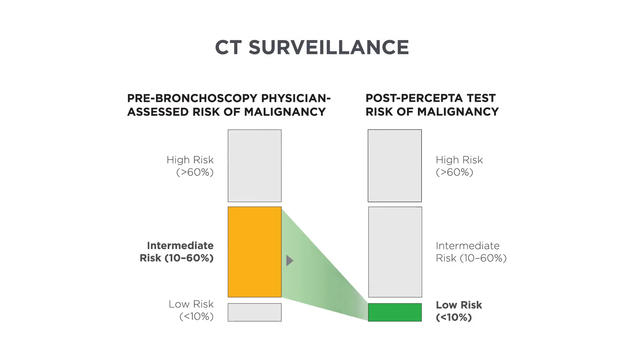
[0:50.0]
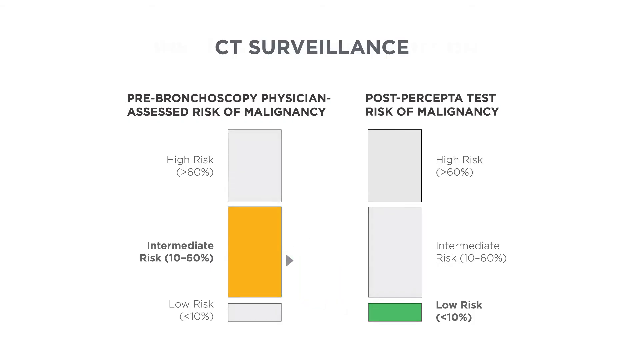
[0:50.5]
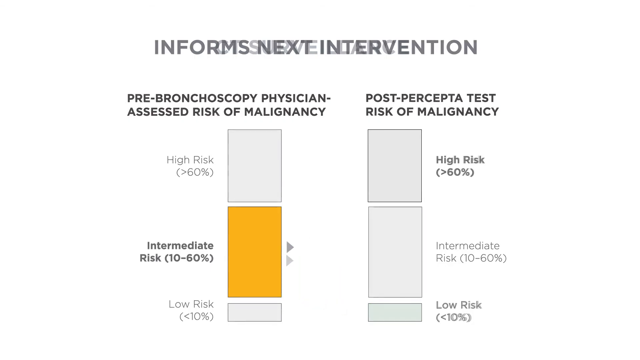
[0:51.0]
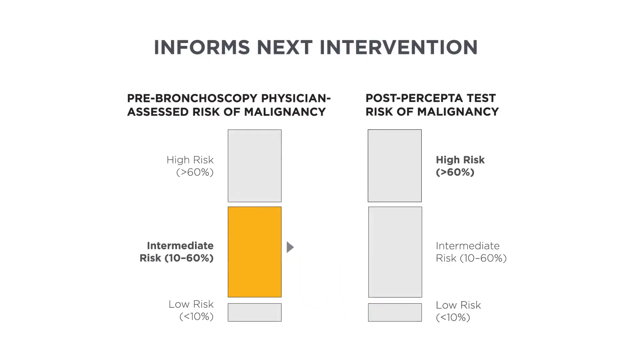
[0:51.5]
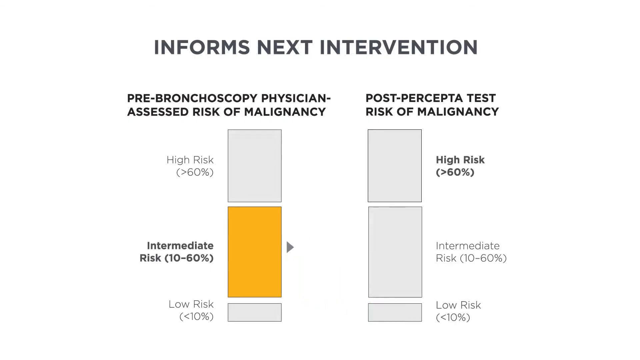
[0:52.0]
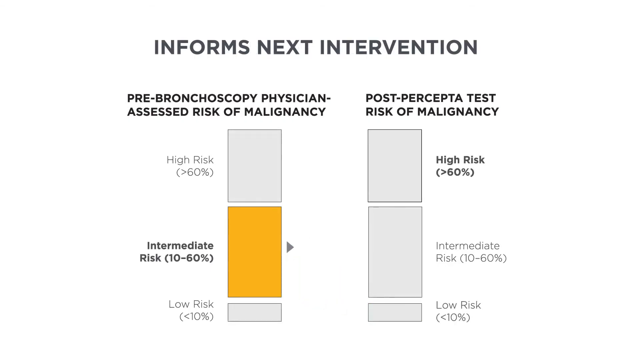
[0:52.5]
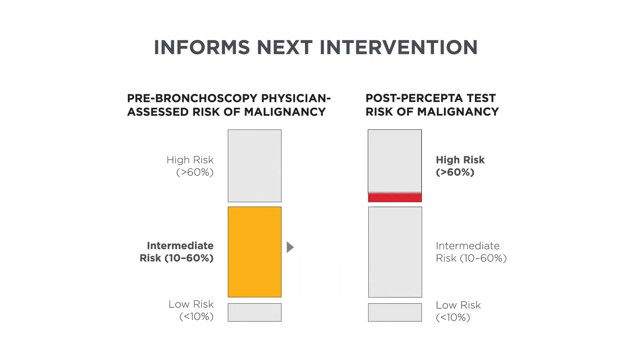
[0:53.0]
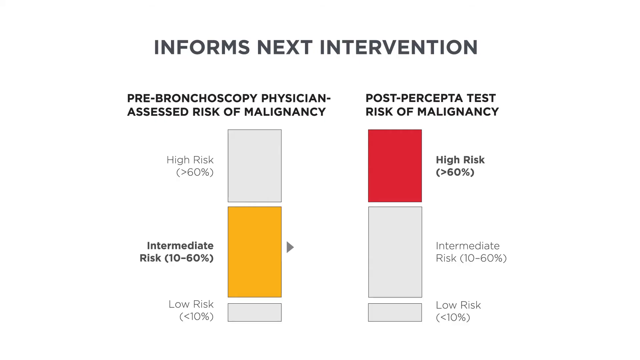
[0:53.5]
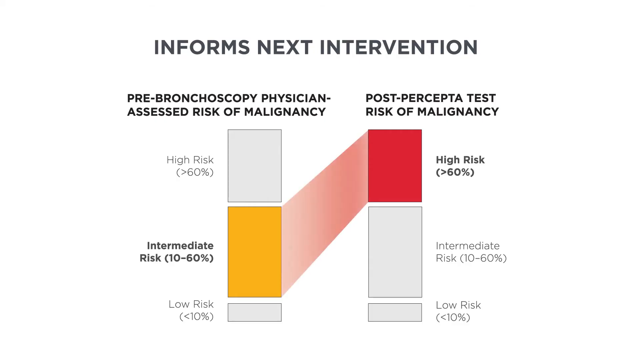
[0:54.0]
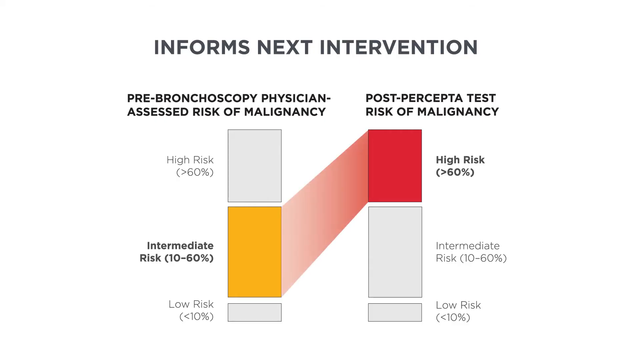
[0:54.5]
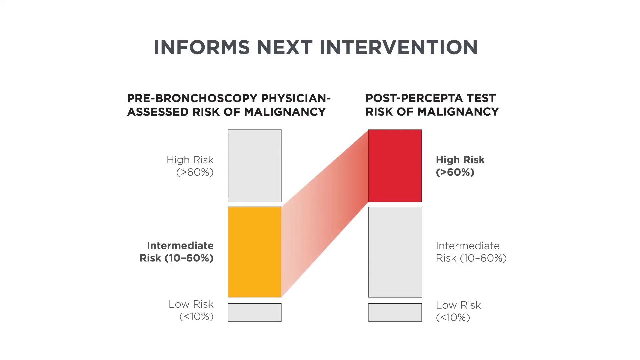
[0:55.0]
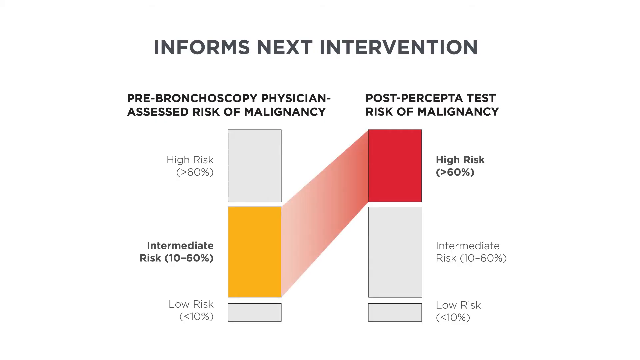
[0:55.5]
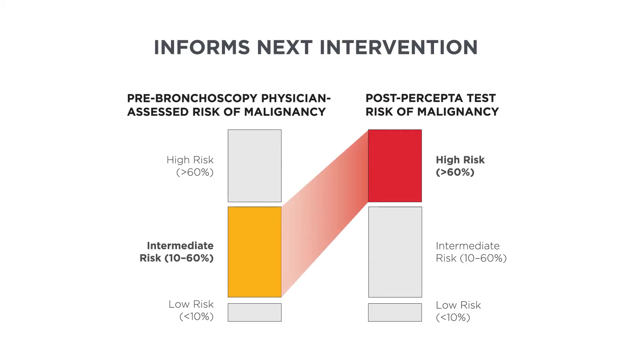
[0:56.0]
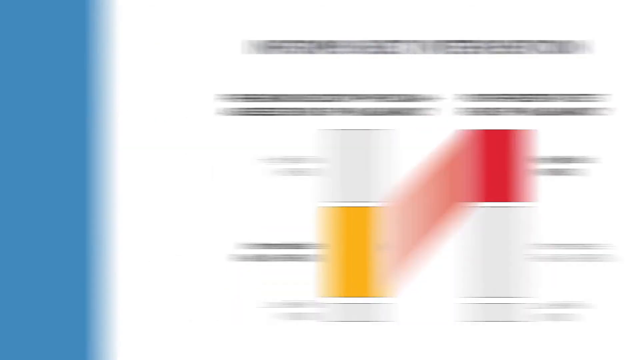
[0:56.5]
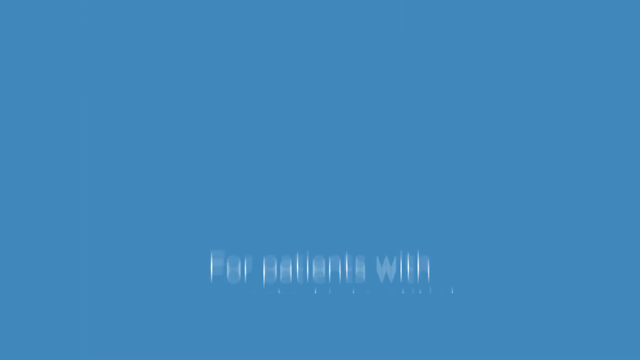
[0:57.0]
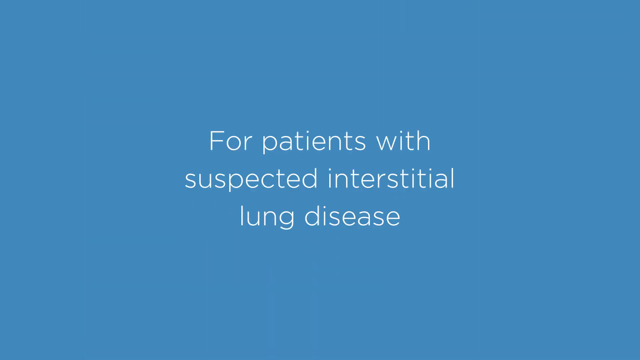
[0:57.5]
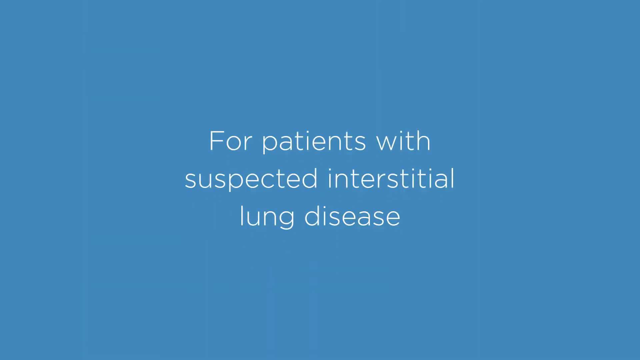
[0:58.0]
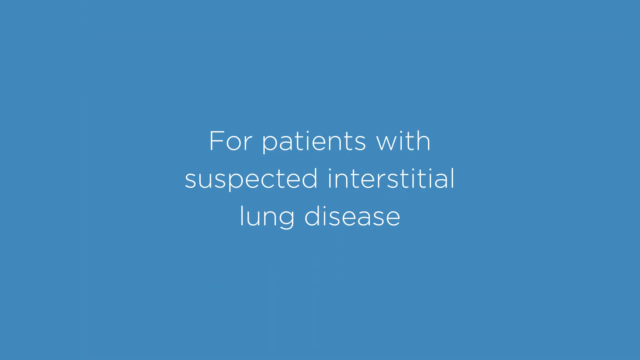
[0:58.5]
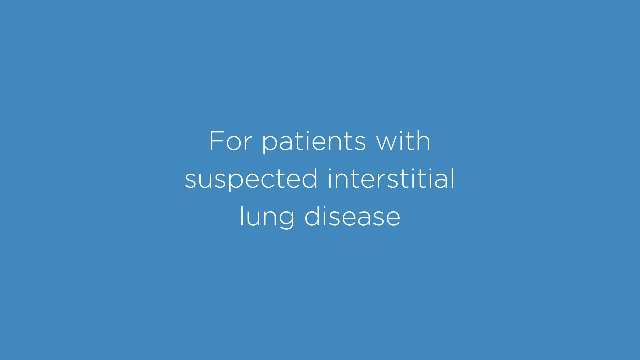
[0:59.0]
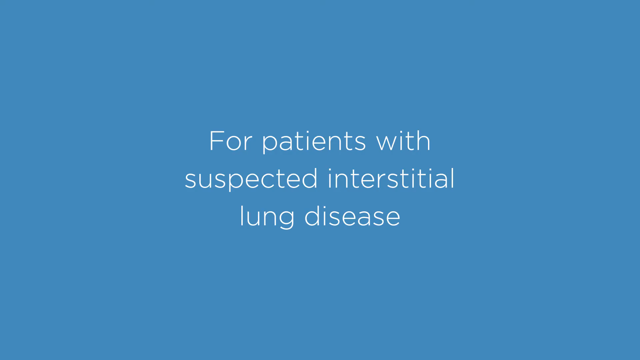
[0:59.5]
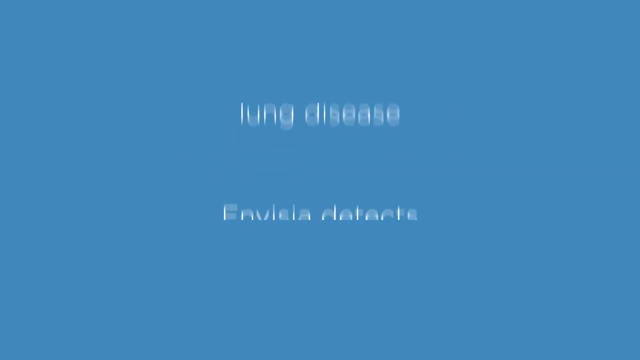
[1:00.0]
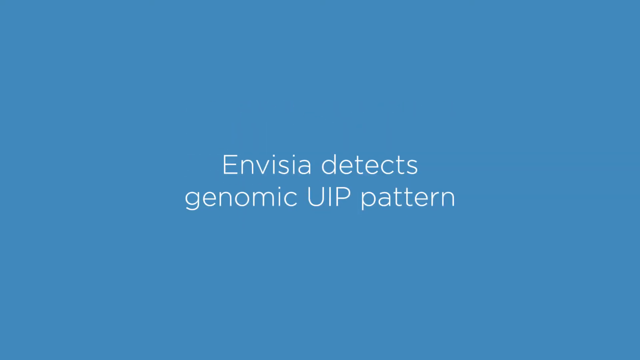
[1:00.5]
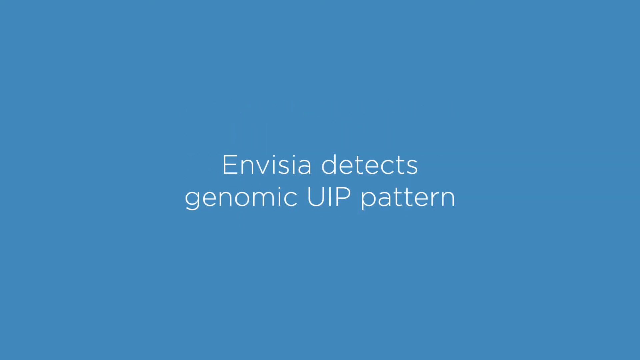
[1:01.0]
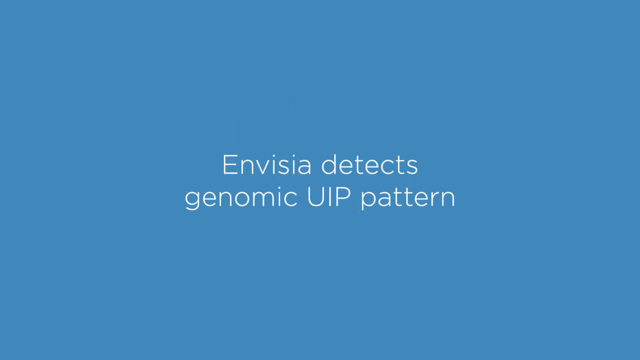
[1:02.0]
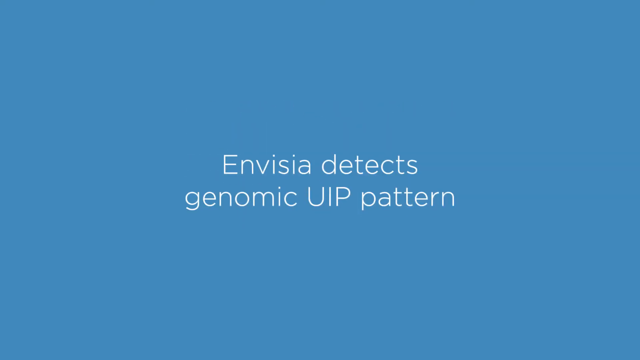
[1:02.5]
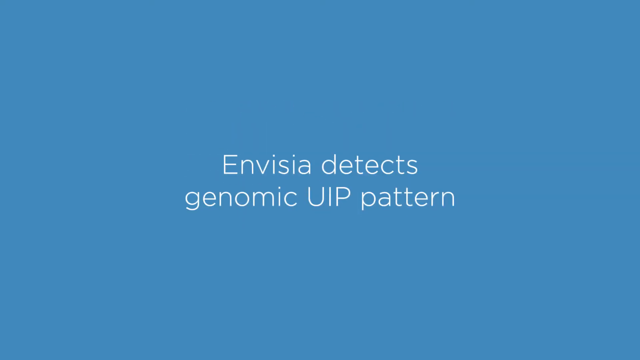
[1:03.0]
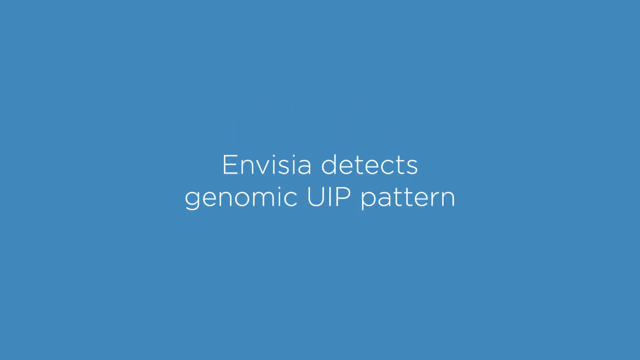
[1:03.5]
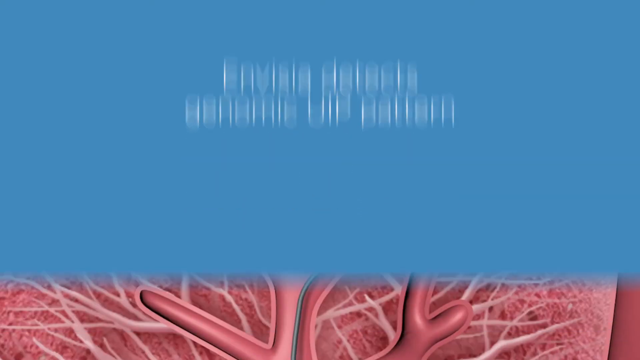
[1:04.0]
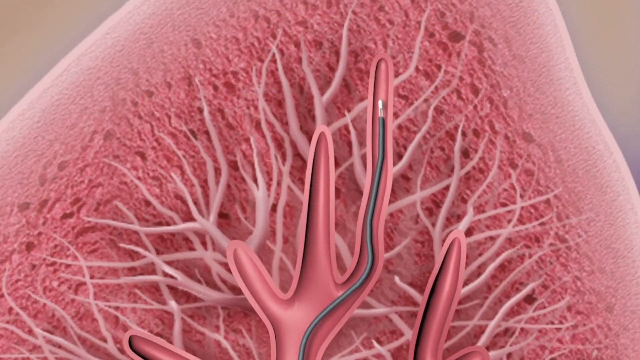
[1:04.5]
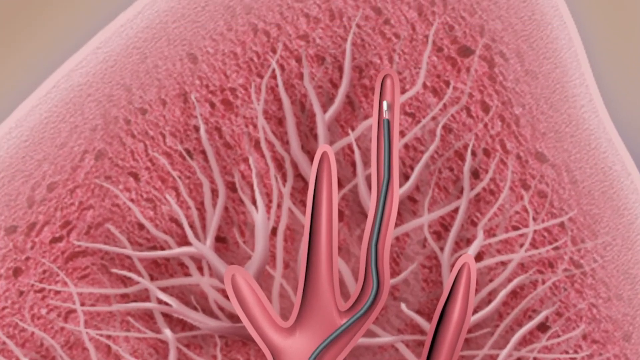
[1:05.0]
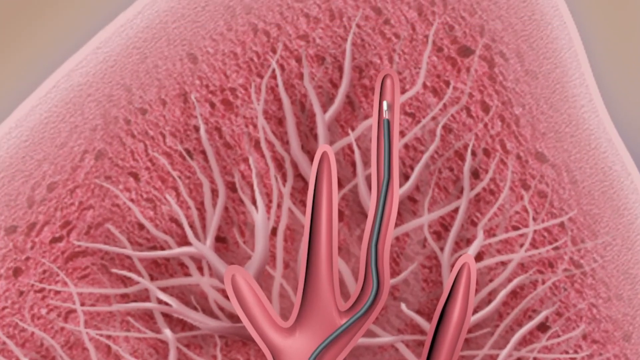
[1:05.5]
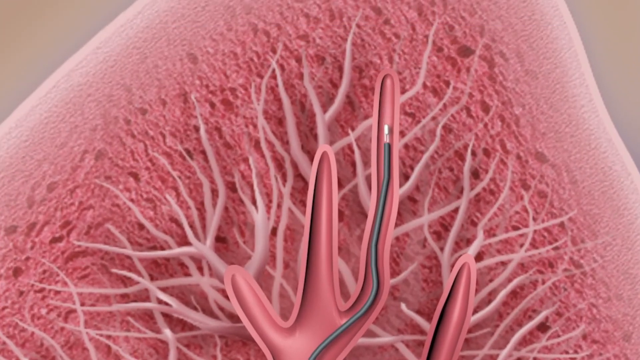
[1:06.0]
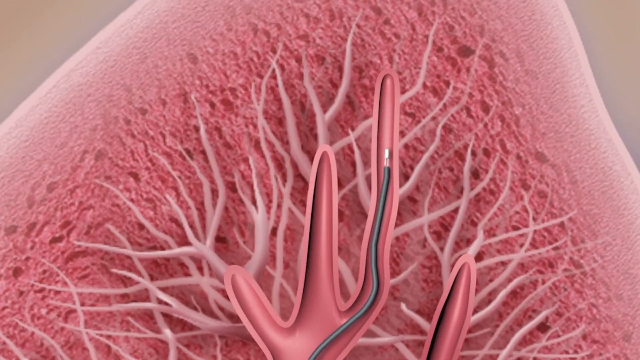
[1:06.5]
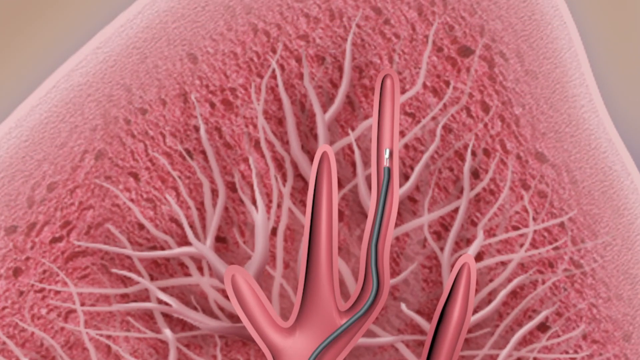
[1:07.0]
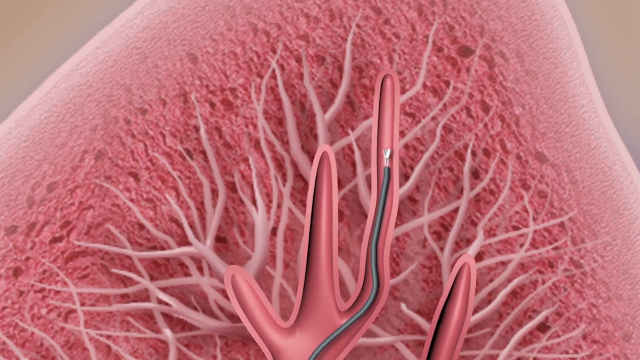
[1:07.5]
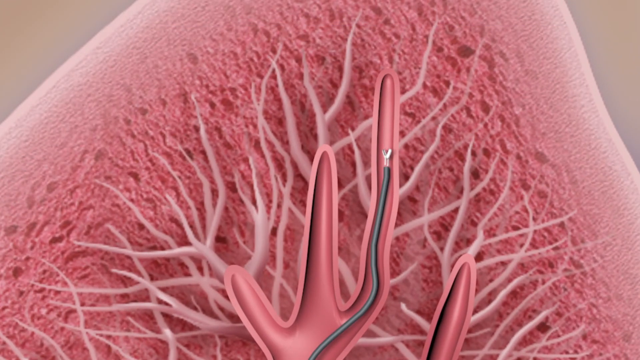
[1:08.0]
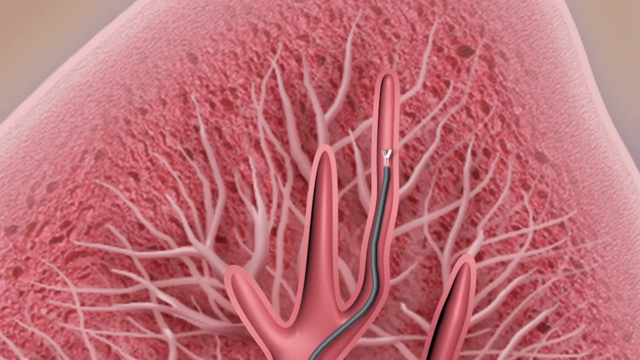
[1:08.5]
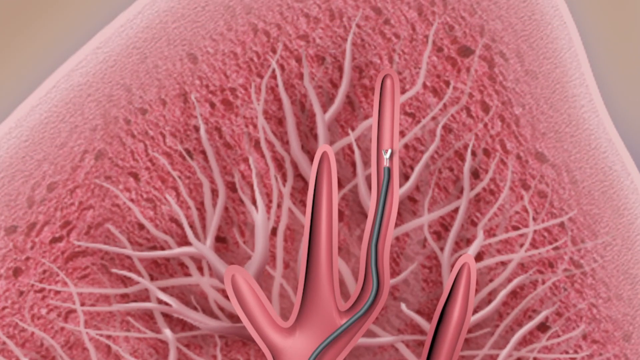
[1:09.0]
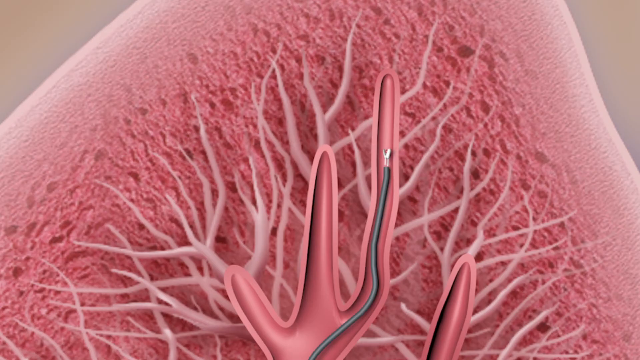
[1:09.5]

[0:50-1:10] A graph is titled "CT surveillance." Below it are two vertical rows of three blocks each. The left set is labeled "prebronchial physician assessed risk of malignancy": at the top, in gray, "high risk, greater than 60%"; in the middle, highlighted in yellow, "intermediate risk, 10 to 60%"; and at the bottom, "low risk, less than 10%." The right-hand set is titled "post-Percepta test risk of malignancy"; its high risk, greater than 60%, and intermediate risk, 10 to 60%, blocks are still gray, and the low risk block is highlighted in green. The text then changes while the bars remain the same; the top now reads "informs next intervention." On the right, under "post-Percepta test risk of malignancy," the top bar, high risk, greater than 60%, is red. On the left, under "prebronchoscopy, physician assessed risk of malignancy," intermediate risk, 10 to 60%, is highlighted in gold. The image then changes to a blue screen reading "for patients with suspected interstitial lung disease. Invisia detects genomic UIP pattern." Next, a cross-section of a lung appears with the black tube stretching down it.